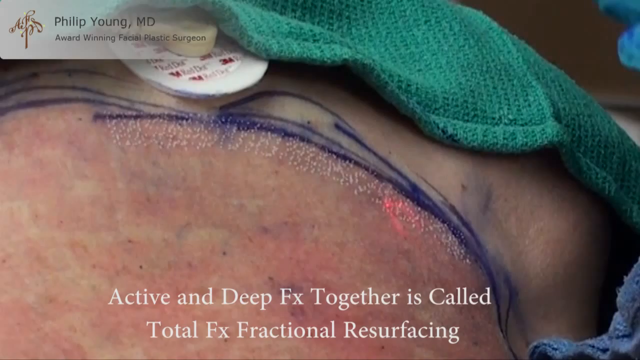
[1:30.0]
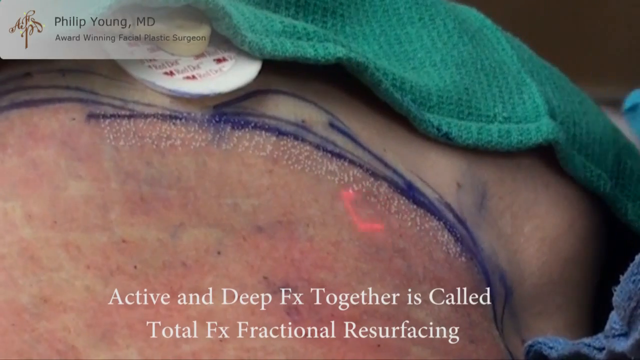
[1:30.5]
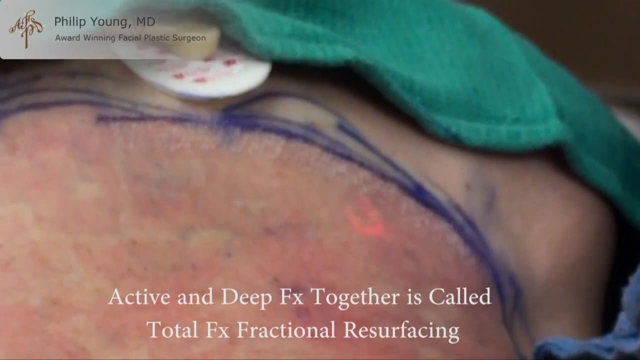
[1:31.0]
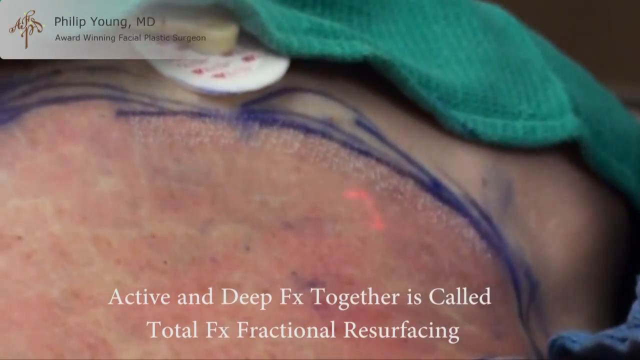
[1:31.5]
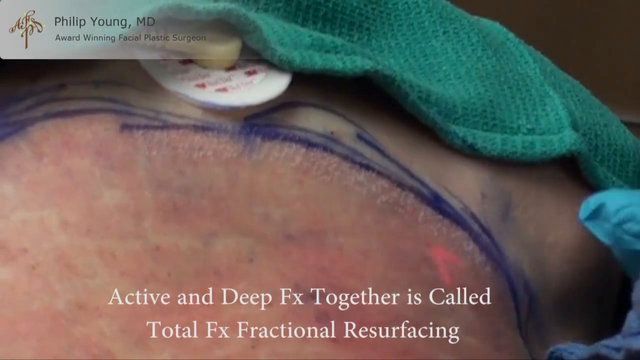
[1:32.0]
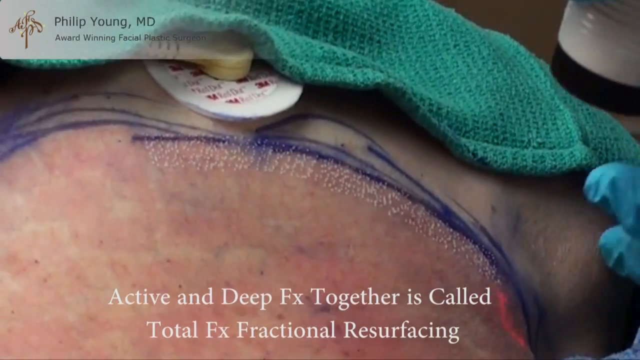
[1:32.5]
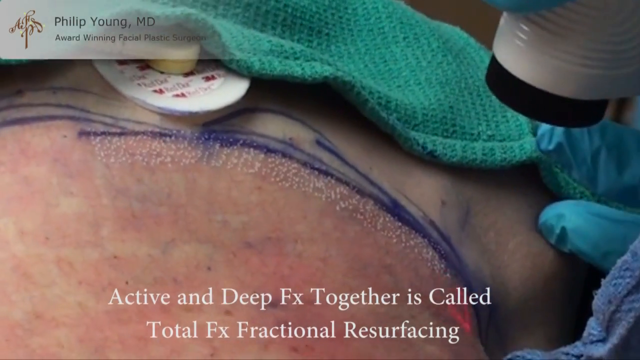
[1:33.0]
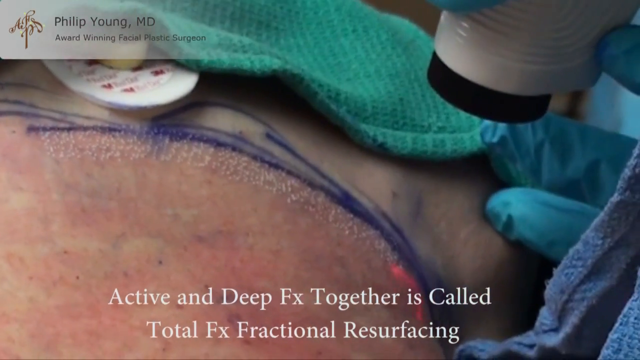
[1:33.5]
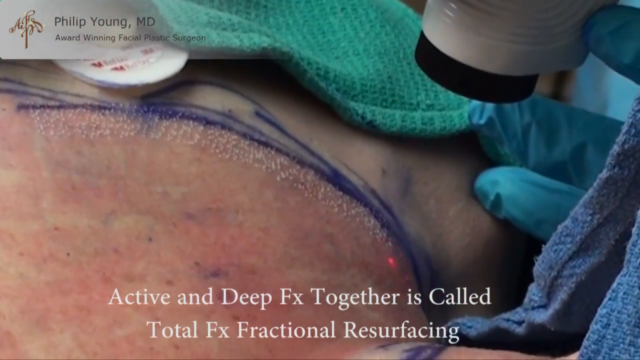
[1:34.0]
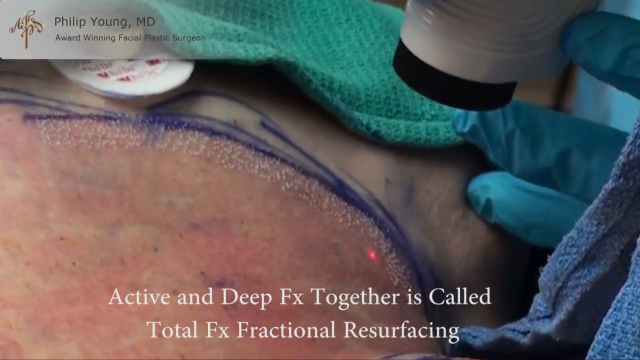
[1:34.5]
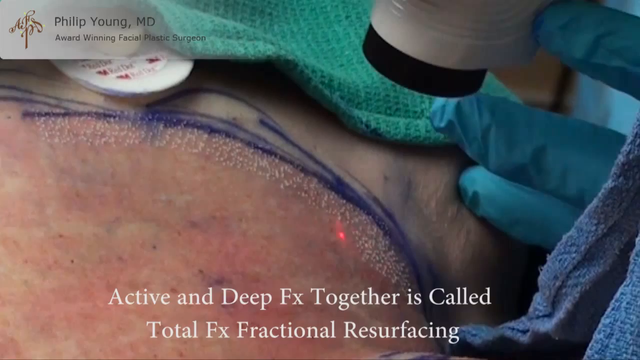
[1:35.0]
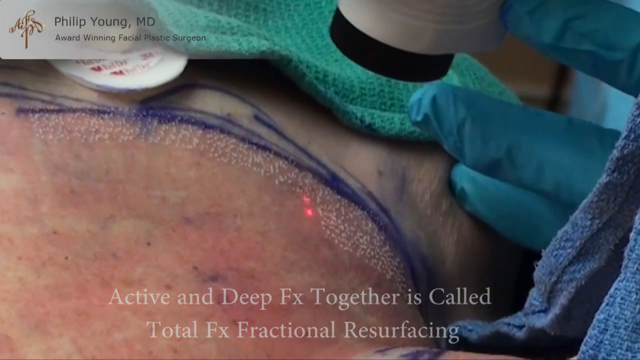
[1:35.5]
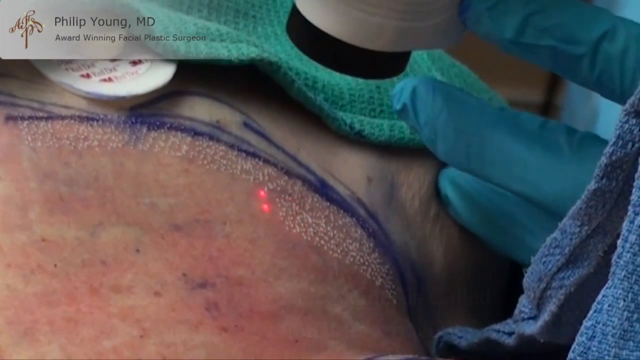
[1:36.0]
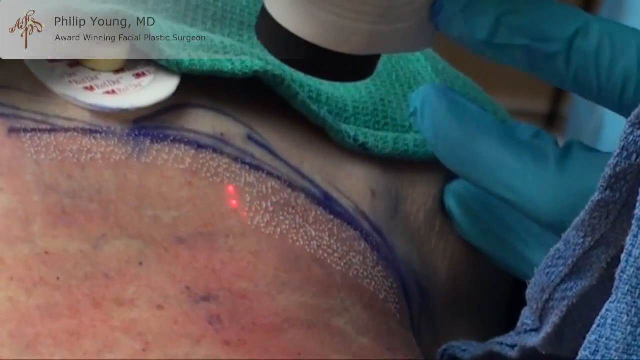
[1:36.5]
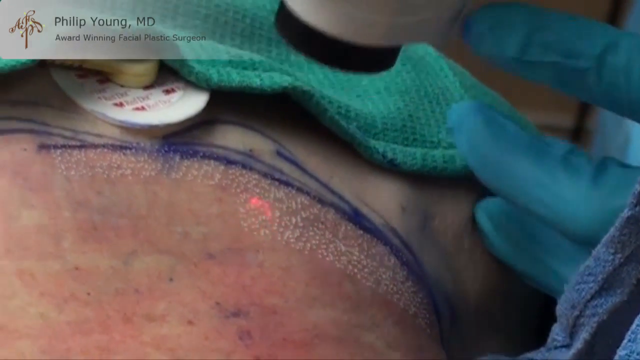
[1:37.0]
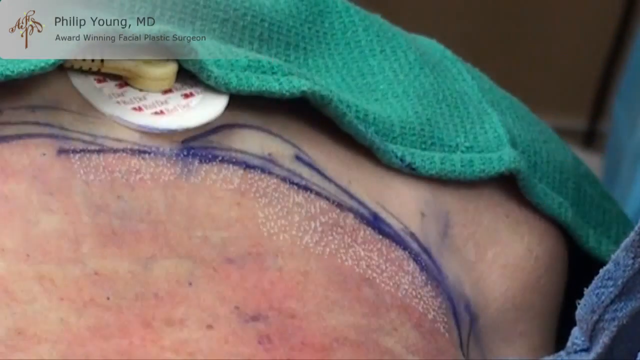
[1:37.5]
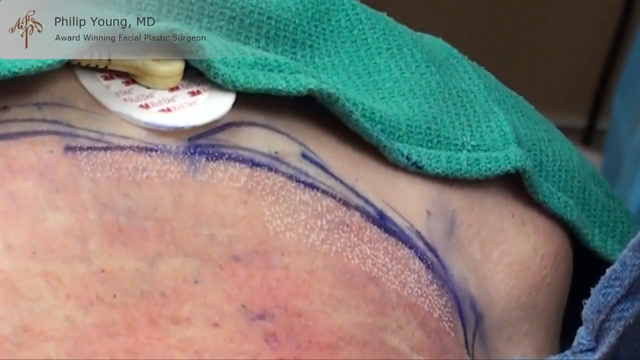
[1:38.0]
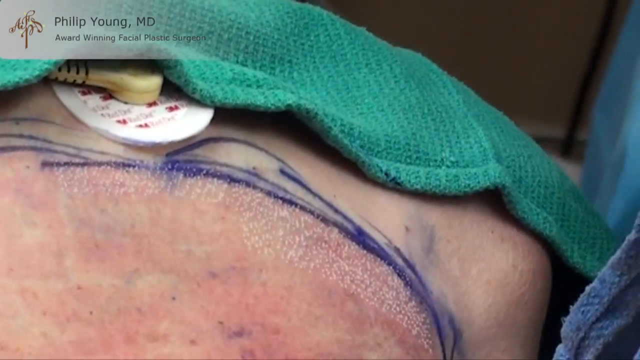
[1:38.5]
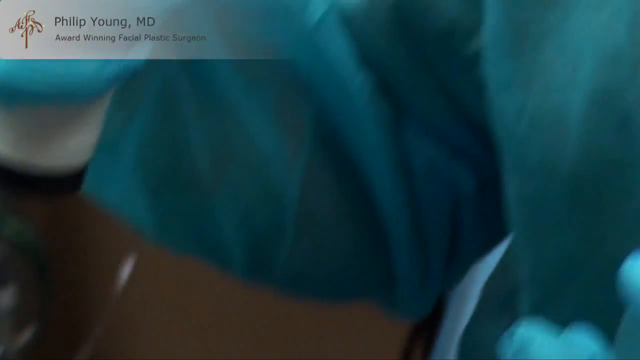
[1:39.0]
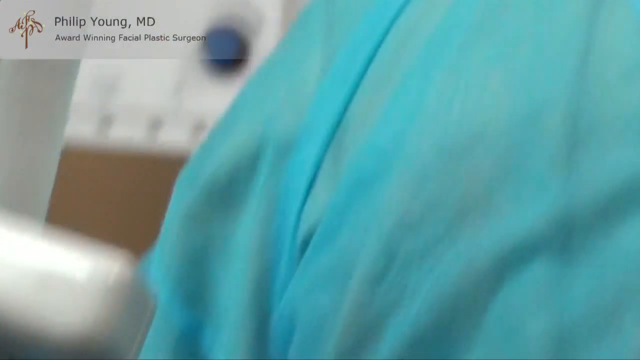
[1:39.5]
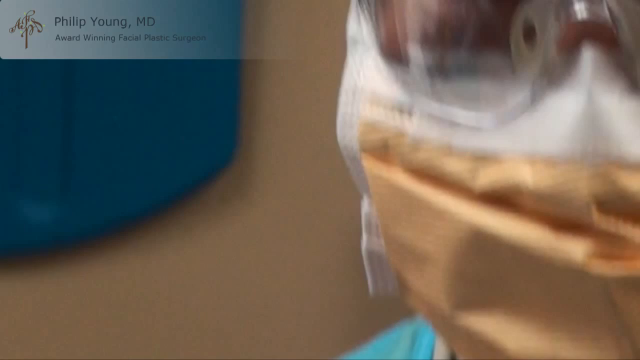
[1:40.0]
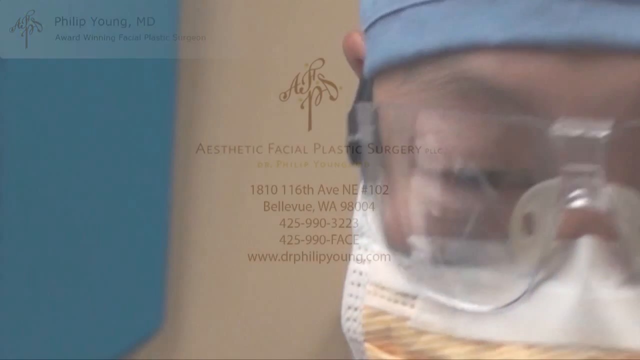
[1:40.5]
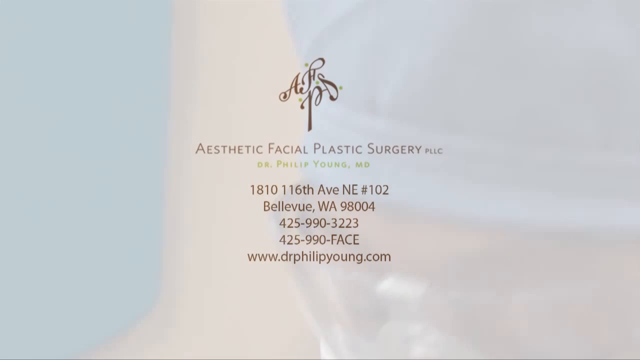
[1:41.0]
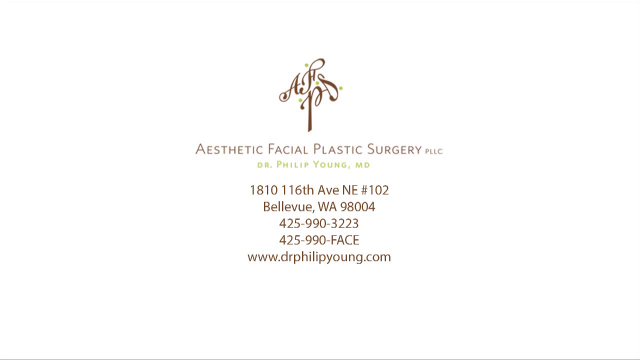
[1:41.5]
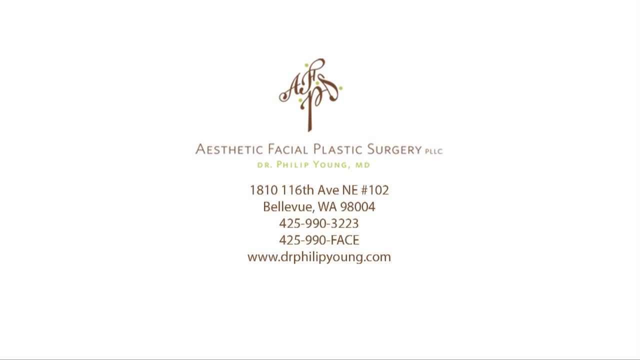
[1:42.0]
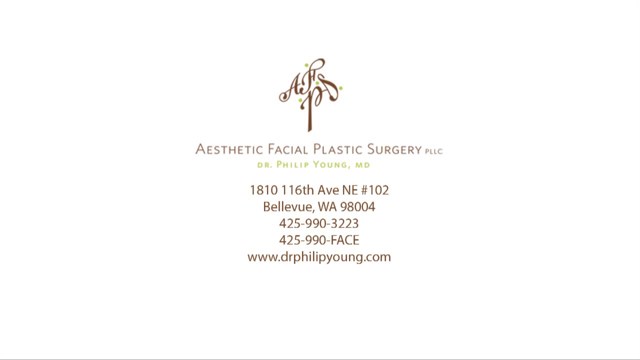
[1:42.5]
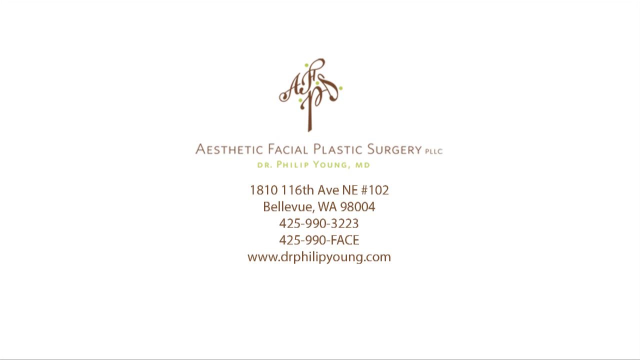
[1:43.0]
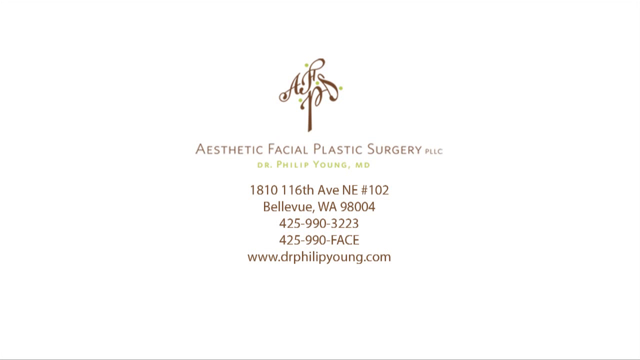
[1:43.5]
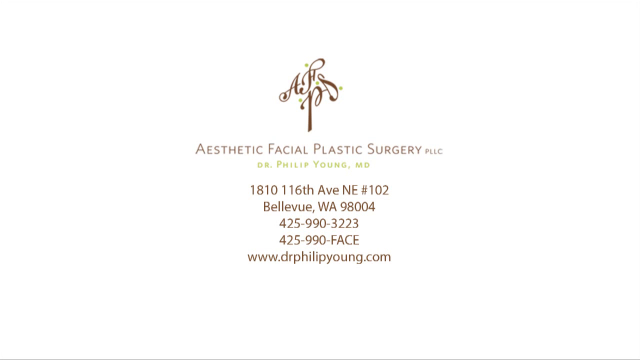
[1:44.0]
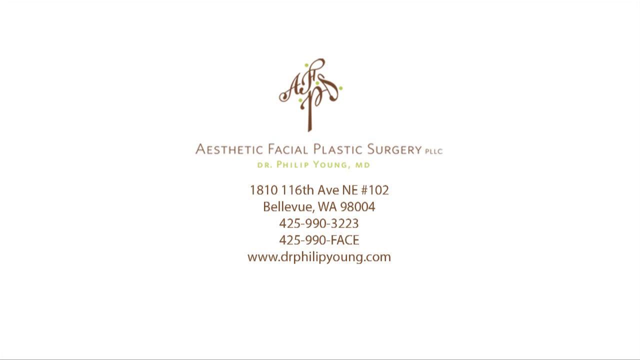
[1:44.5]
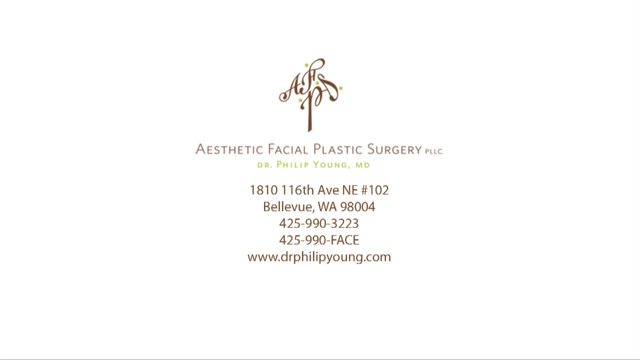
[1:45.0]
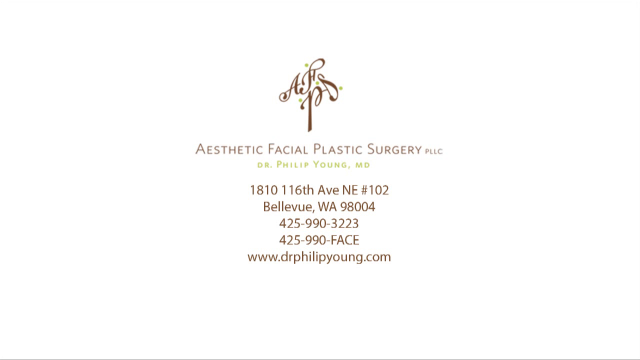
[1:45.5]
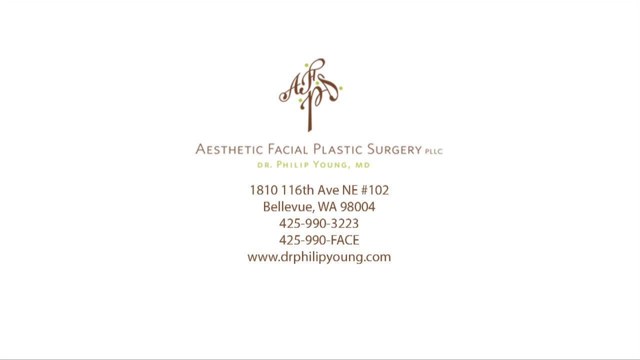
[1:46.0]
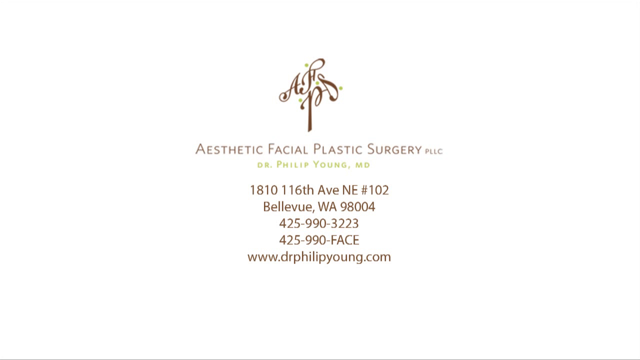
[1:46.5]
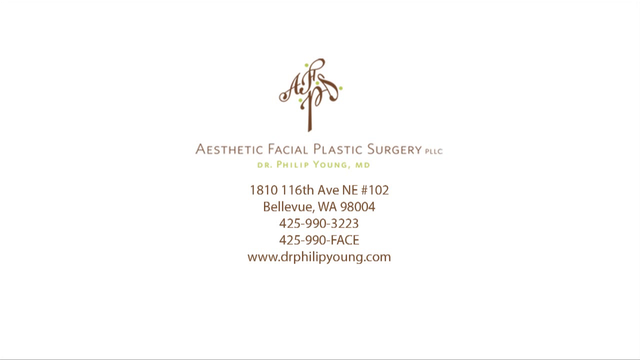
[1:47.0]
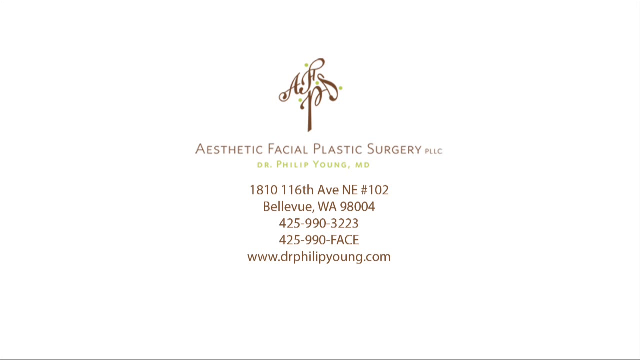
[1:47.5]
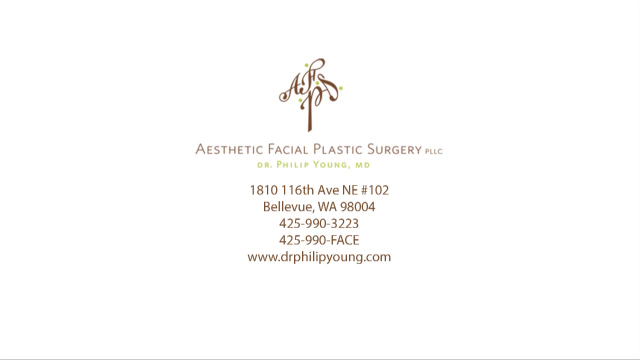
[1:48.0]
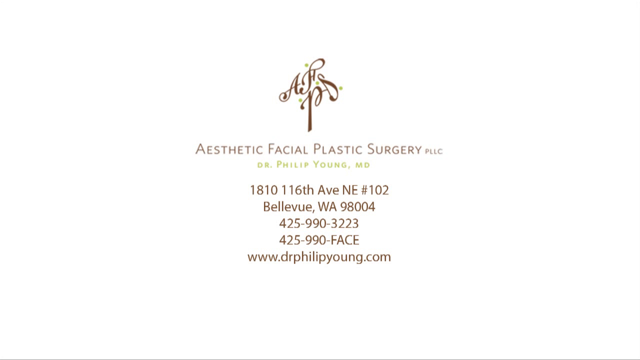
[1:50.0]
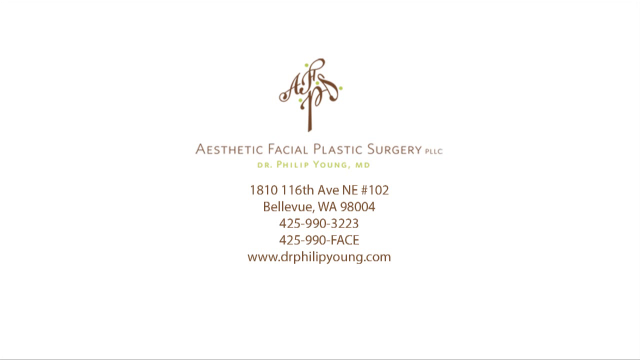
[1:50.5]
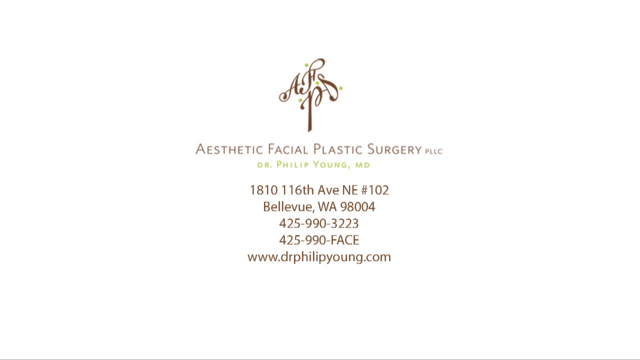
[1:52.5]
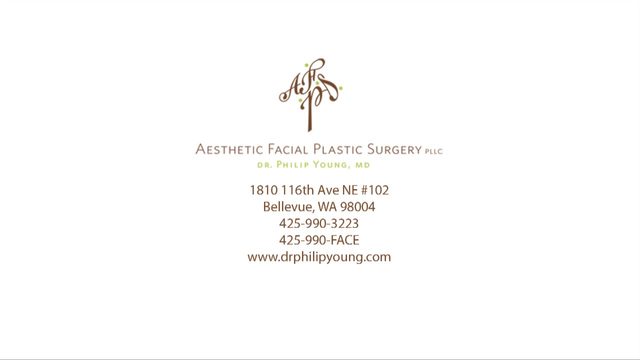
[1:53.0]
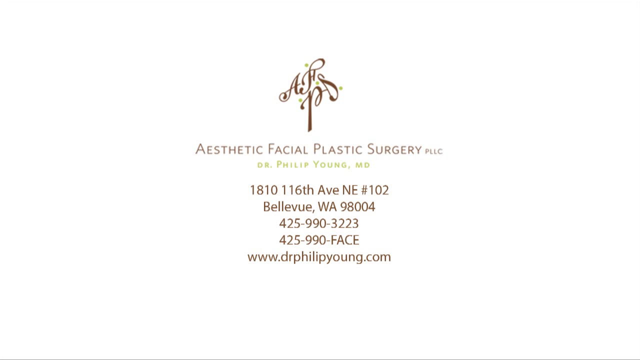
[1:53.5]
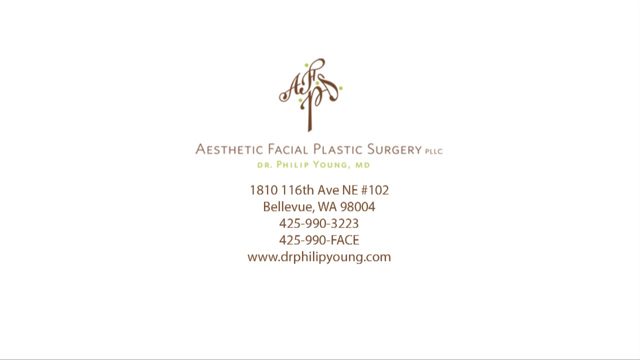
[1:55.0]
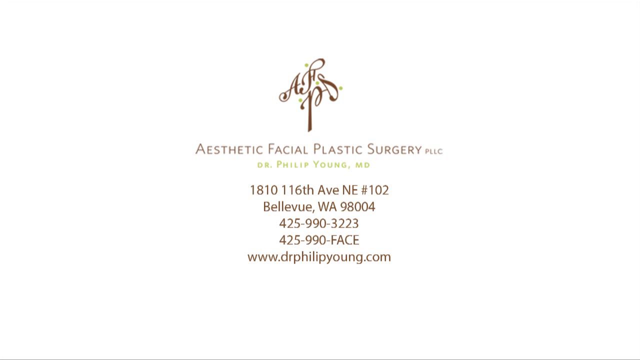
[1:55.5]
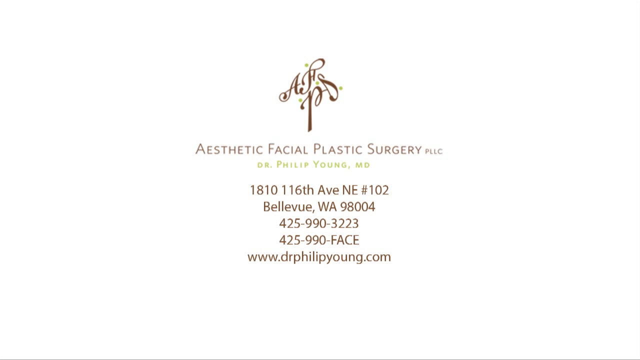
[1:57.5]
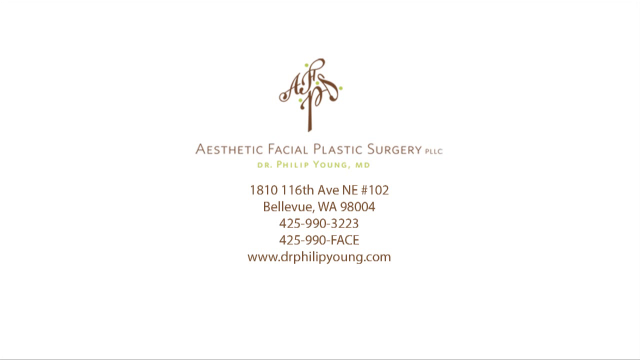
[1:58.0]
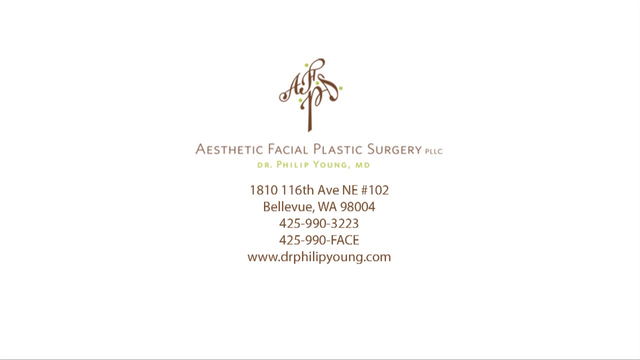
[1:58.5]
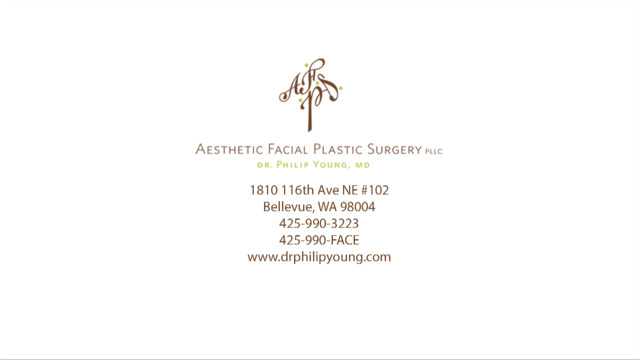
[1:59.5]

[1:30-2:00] A person is laying down with a lot of white dots on their skin, blue ink covering her skin, and some red discoloration. White text on the screen reads "active and deep FX together is called total FX fractional resurfacing". A green towel is laying on top of her, a white banner in the top left corner reads "Philip Young MD award winning facial plastic surgeon", and a blue glove is kind of at the top right corner of the video. The laser kind of moves around her skin. The man comes in with his hands, holding an object that looks like part of where the laser comes out, and moves it across the other dots to make additional dots. He then stops, and the camera moves up toward the doctor's face. The video transitions to a white background with a brown tree made up of letters reading "AHSP", with four little green dots surrounding it. Brown and green text reads "Aesthetic facial plastic surgery PLLC Dr. Philip Young MD 1810 116th Avenue NE number 102 Bellevue Washington 98004 425-990-3223 425-990-FACE www.drphilipyoung.com". This stays on screen for the rest of the video.